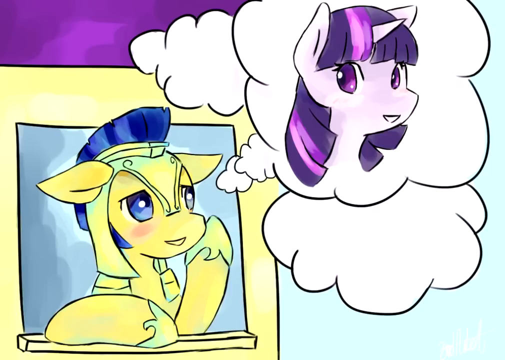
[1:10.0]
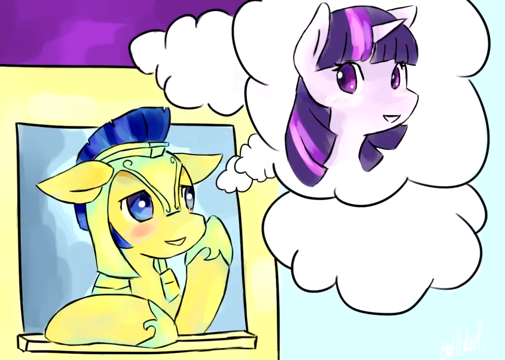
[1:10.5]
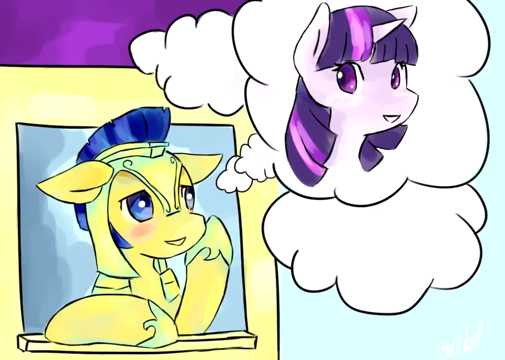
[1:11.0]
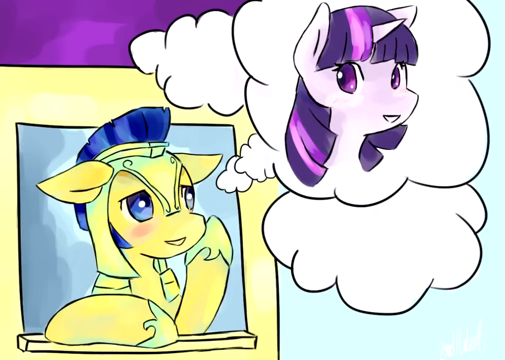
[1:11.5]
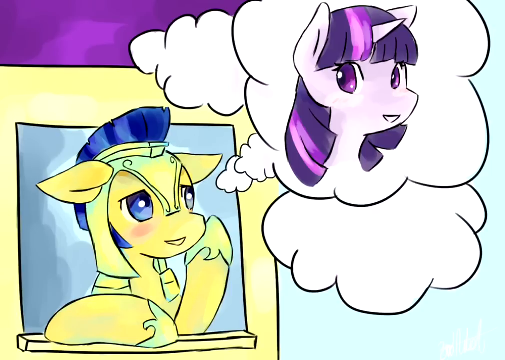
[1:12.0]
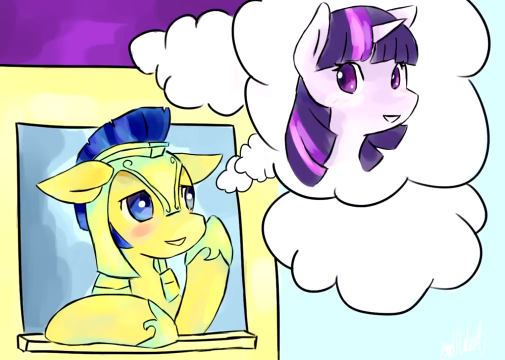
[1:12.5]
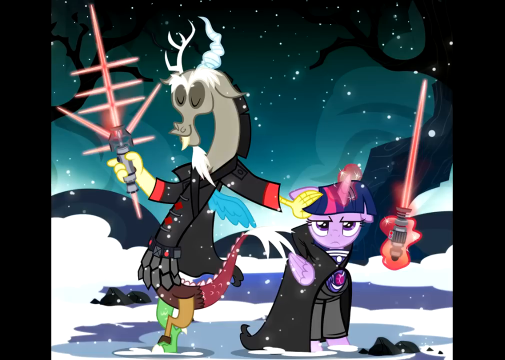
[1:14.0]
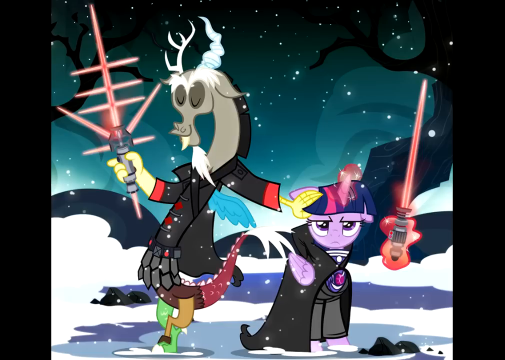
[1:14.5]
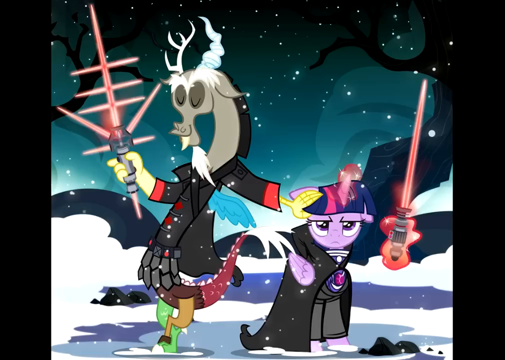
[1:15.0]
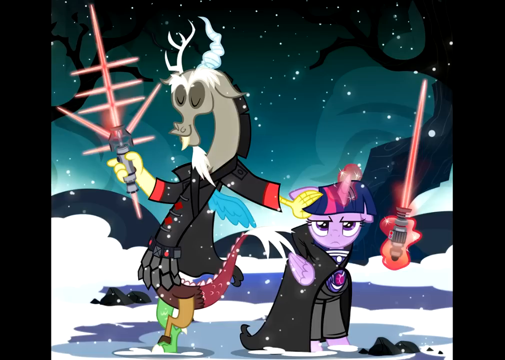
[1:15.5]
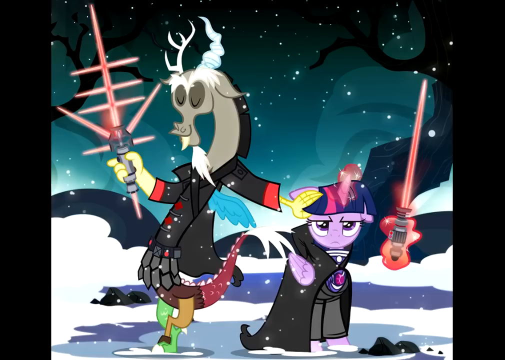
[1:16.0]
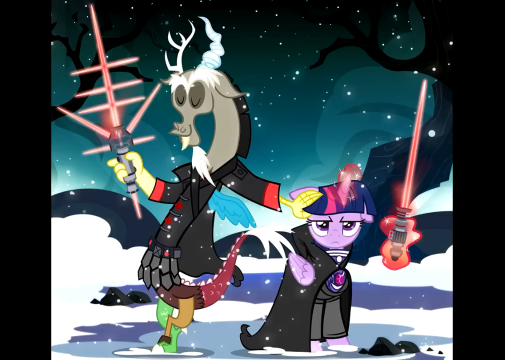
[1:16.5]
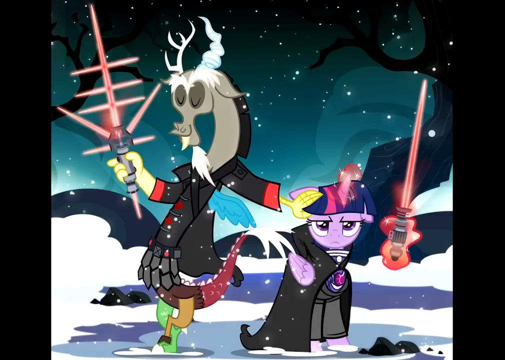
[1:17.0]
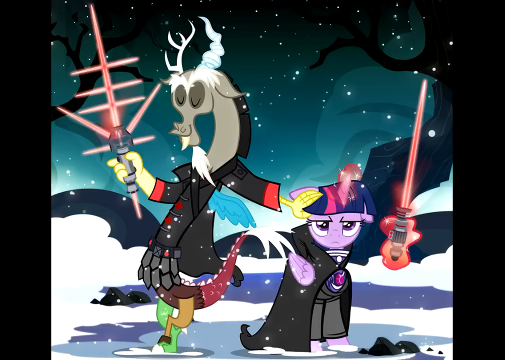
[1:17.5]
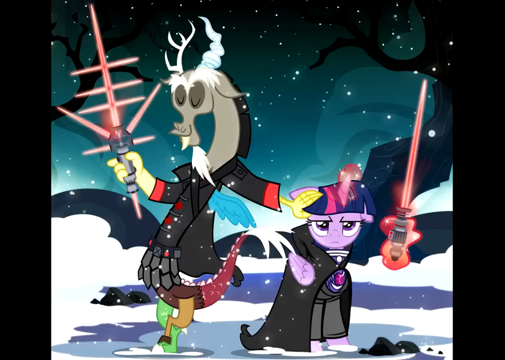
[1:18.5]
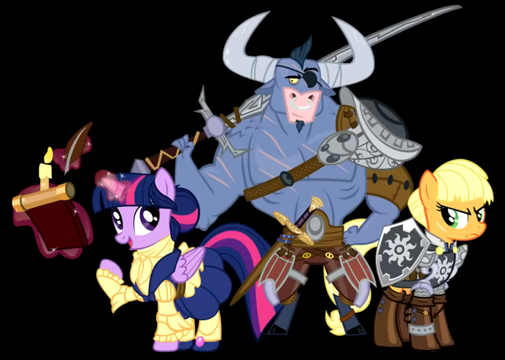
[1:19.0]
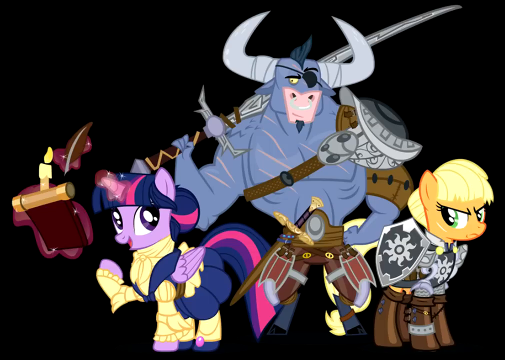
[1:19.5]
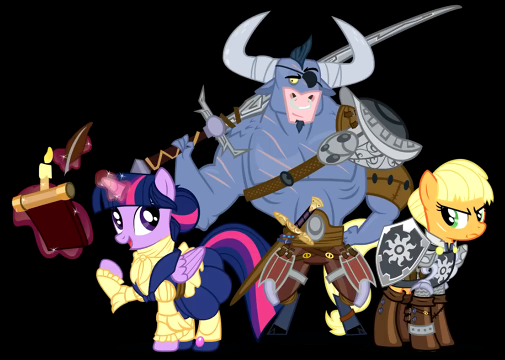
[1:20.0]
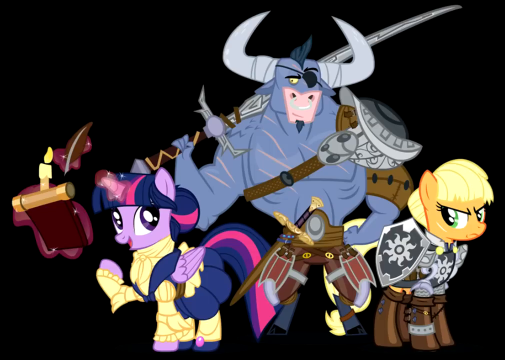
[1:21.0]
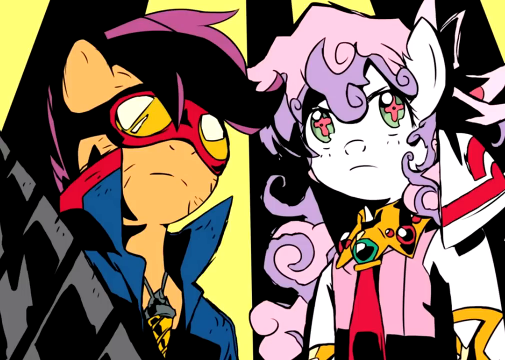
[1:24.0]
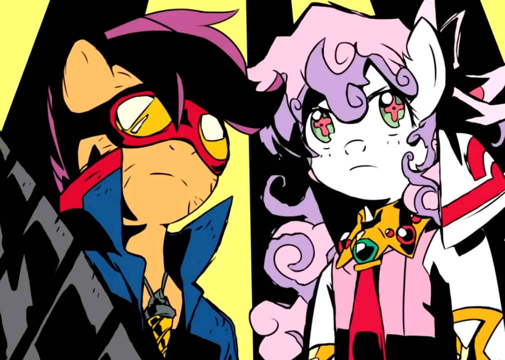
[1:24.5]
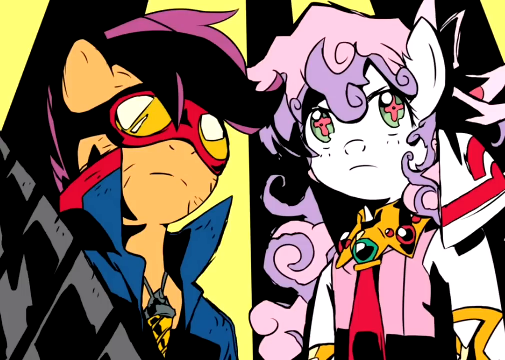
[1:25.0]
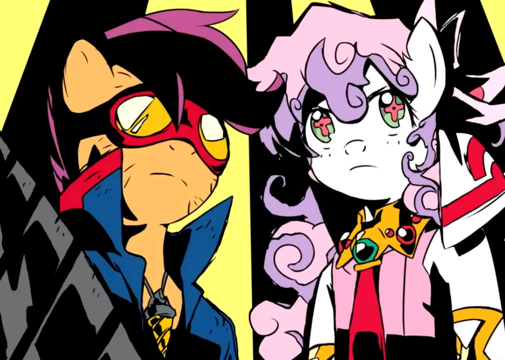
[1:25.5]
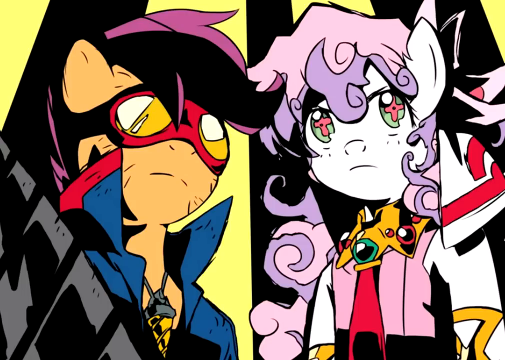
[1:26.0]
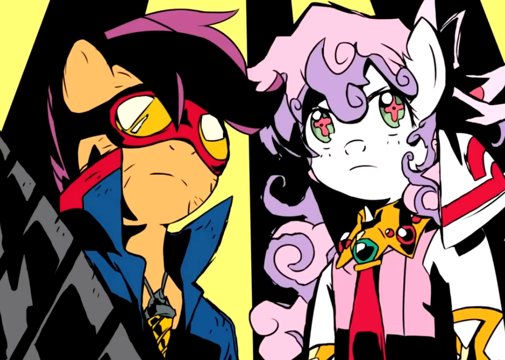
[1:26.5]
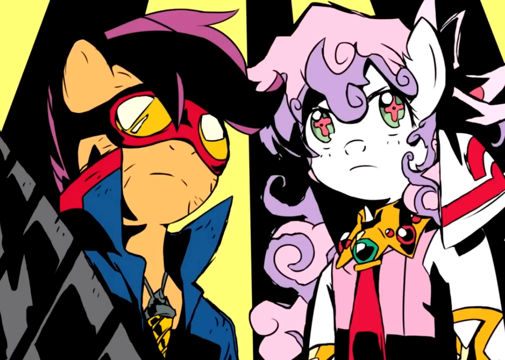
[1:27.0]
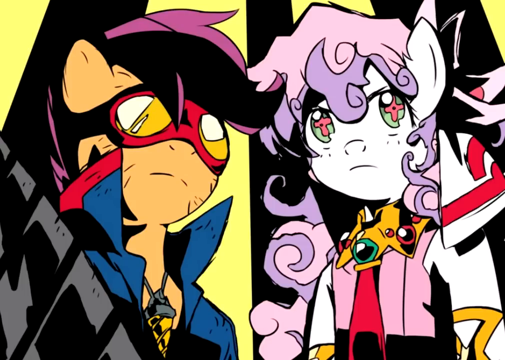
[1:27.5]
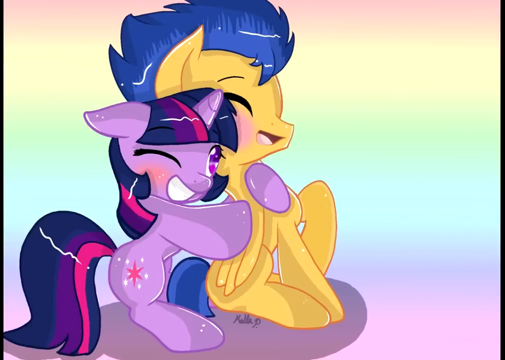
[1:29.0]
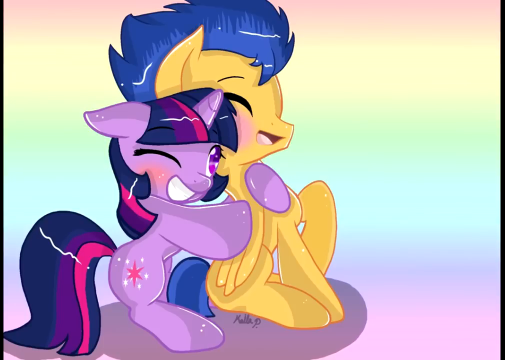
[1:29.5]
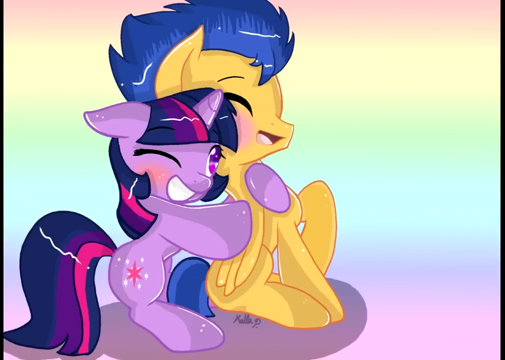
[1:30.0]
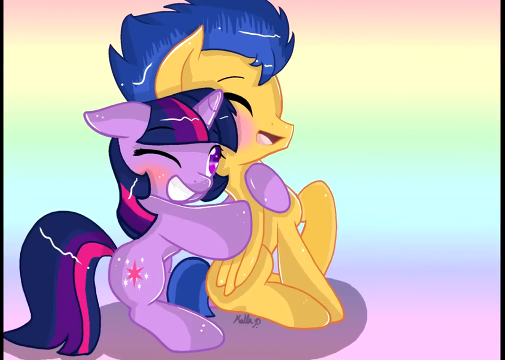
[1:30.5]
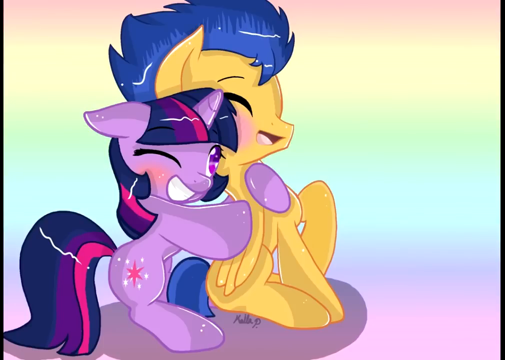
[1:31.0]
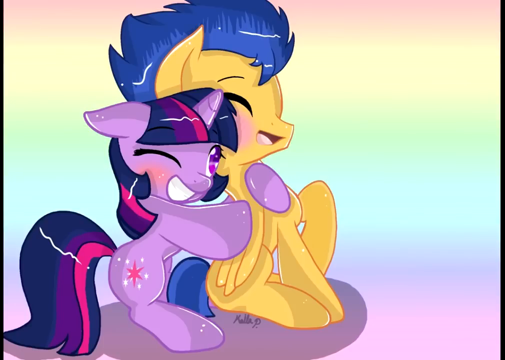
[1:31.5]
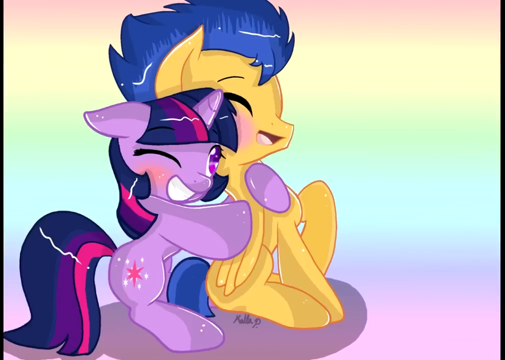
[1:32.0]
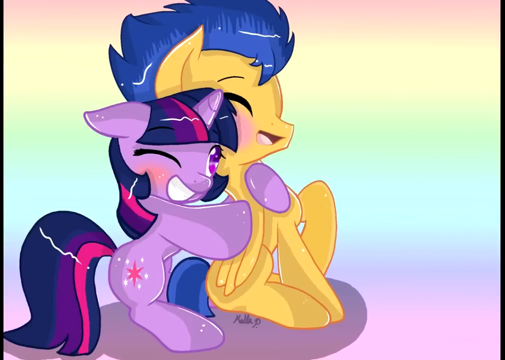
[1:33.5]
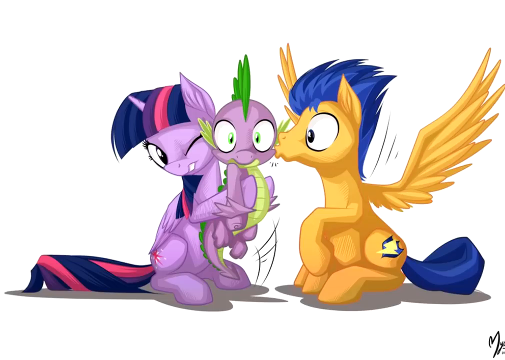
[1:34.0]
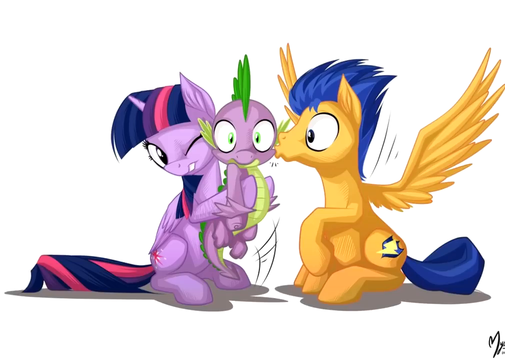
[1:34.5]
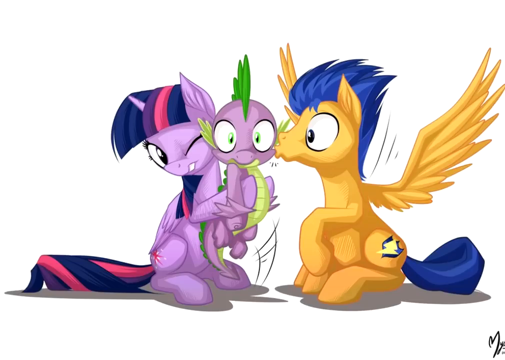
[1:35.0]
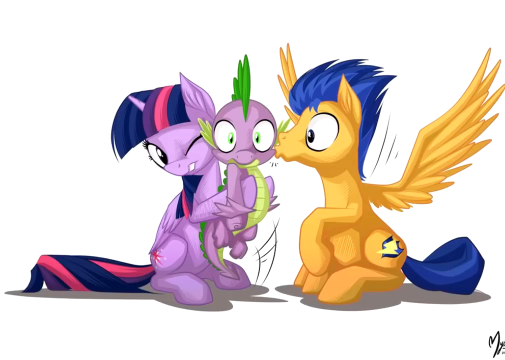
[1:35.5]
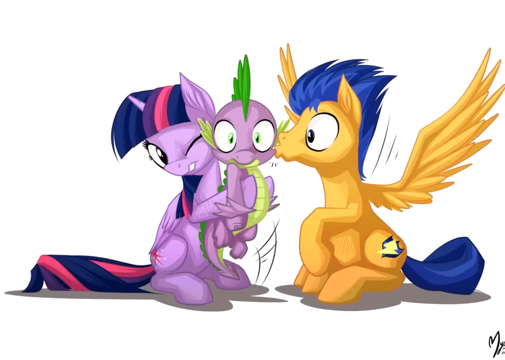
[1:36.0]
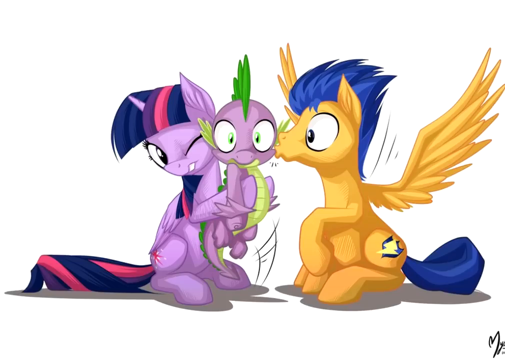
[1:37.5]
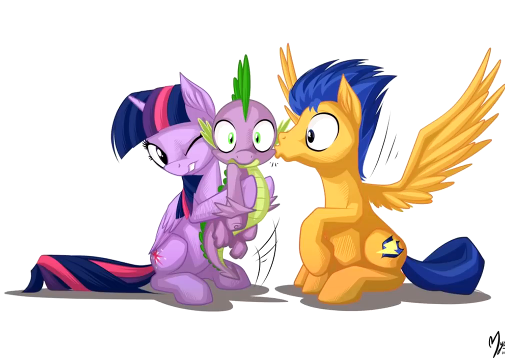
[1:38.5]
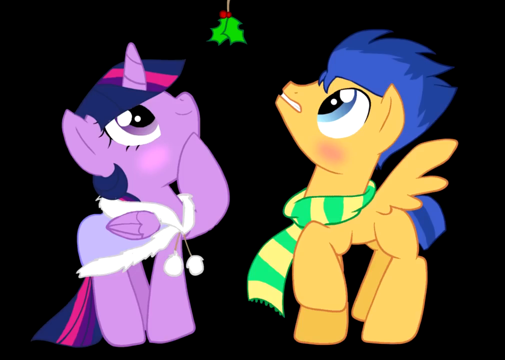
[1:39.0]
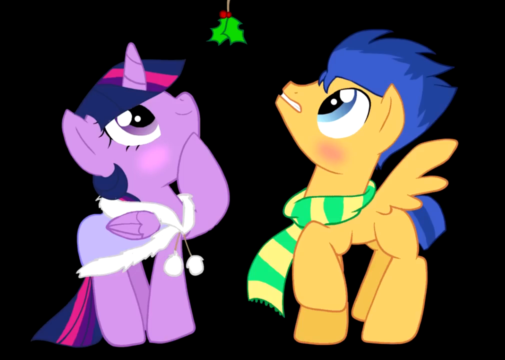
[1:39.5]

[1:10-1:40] A piece of art shows, on the left, a yellow horse wearing an almost Roman-esque helmet in a yellowy green colour with a blue plume. A little thought bubble pops out of his head to the right, where he is thinking of or dreaming of one of the ponies seen earlier, with purple eyes, a unicorn horn and a purple mane, looking very happy. The video cuts to an image of what looks like a gazelle and a pony with lightsabers, maybe dressed as Sith from Star Wars. Another fan art image shows two little ponies dressed in armour and a big minotaur bull guy wearing armour and holding a big sword. Then comes fan art of two ponies on either side facing each other in a very cartoony style, then two ponies hugging, then two ponies hugging with a little kind of pony/dragon between them, and then two ponies under some holly, looking up at it in confusion and surprise.